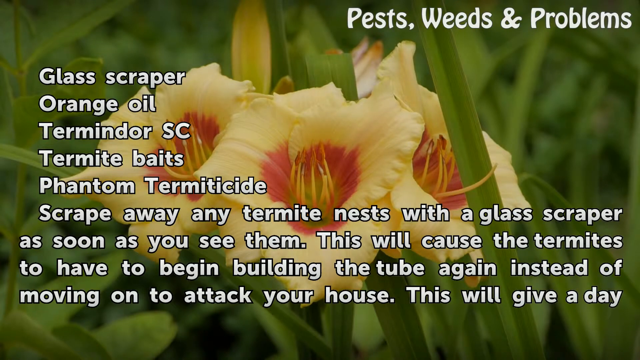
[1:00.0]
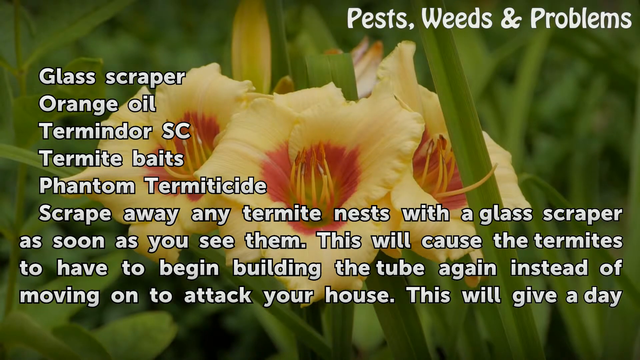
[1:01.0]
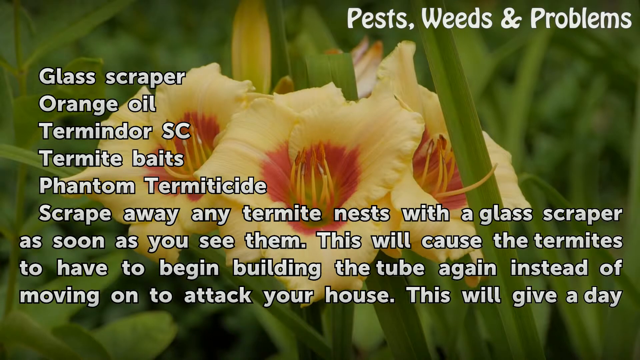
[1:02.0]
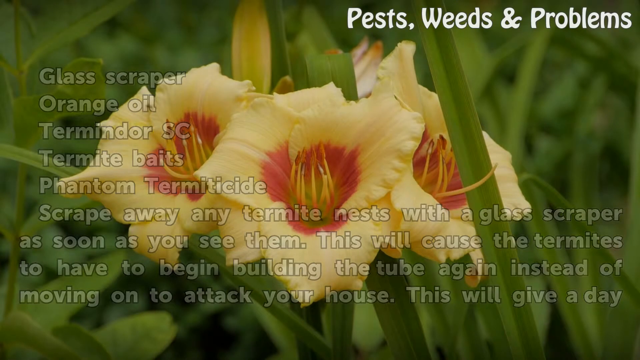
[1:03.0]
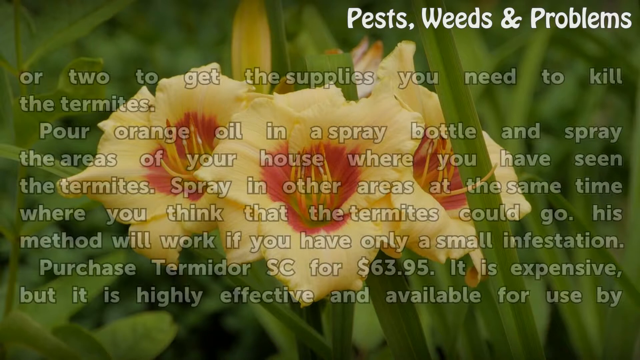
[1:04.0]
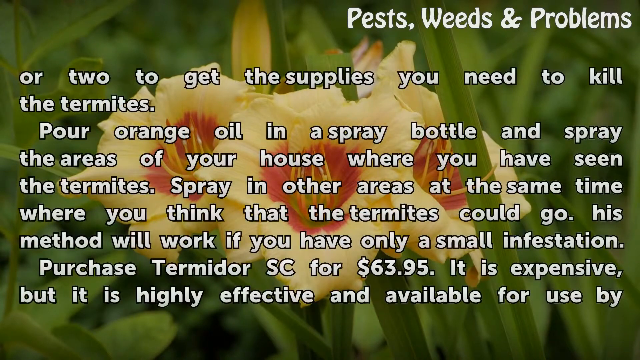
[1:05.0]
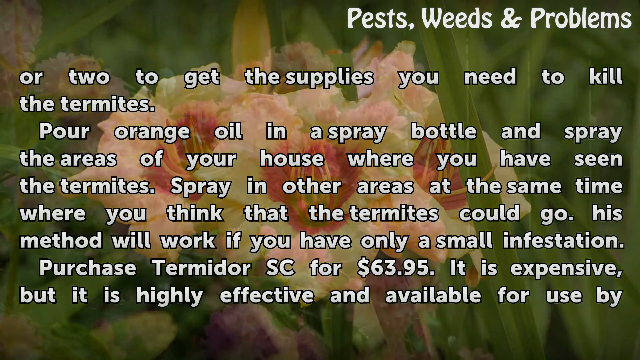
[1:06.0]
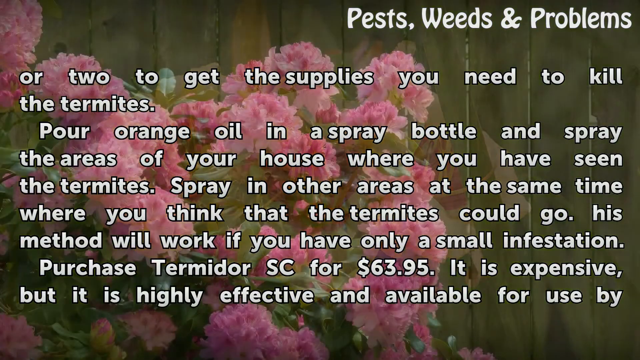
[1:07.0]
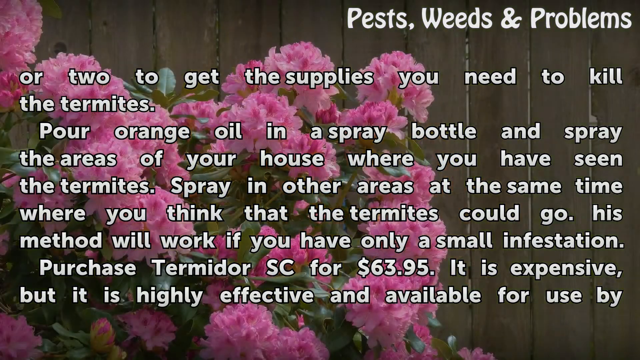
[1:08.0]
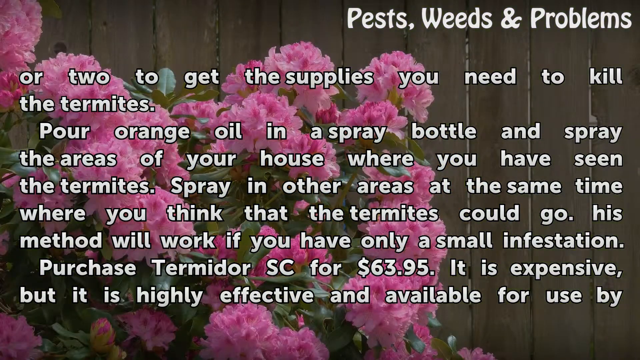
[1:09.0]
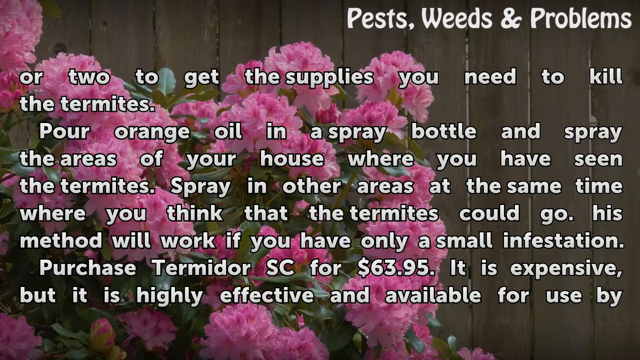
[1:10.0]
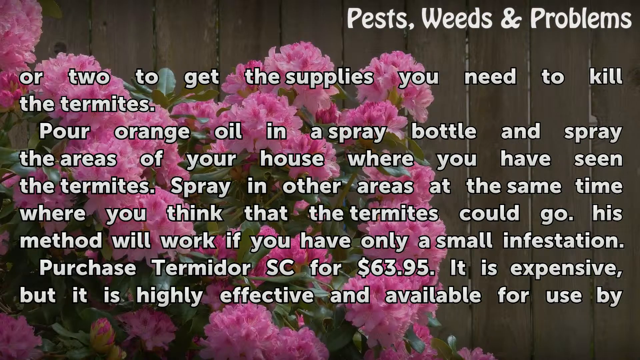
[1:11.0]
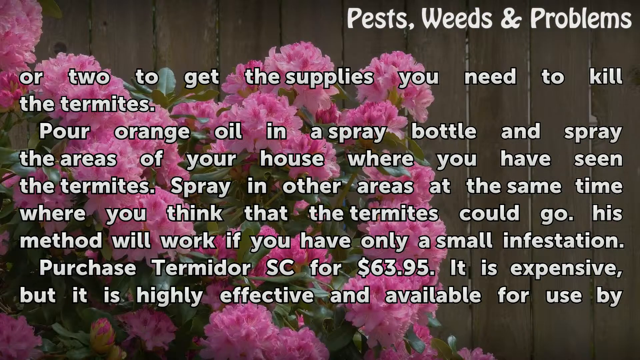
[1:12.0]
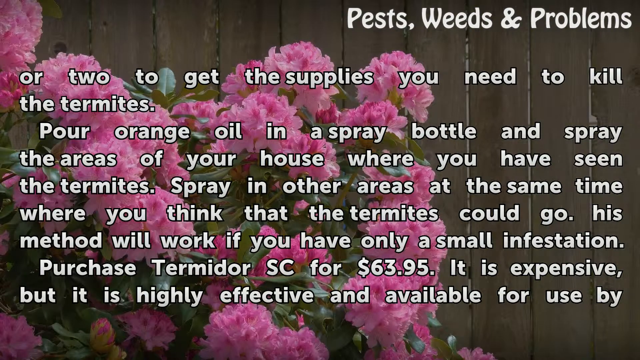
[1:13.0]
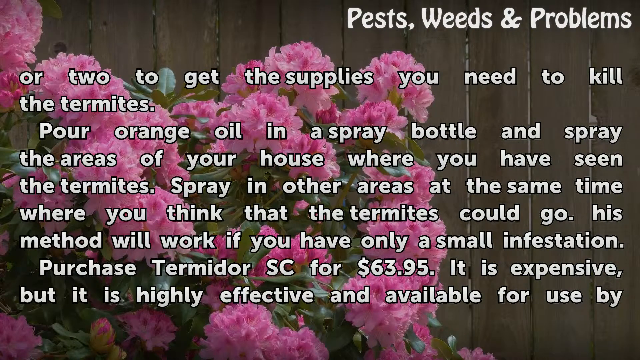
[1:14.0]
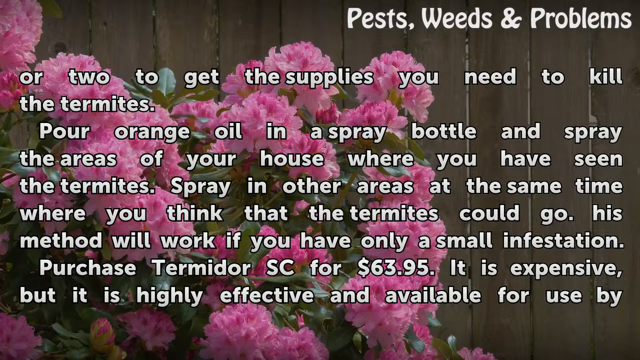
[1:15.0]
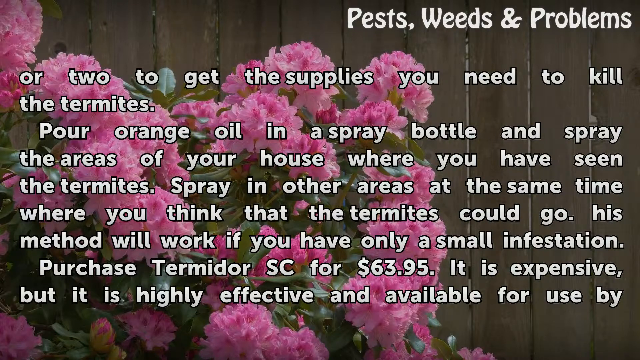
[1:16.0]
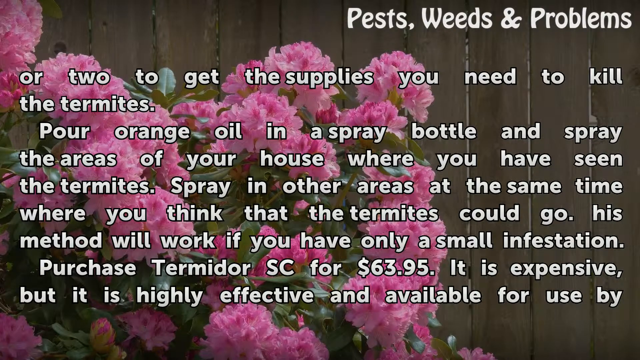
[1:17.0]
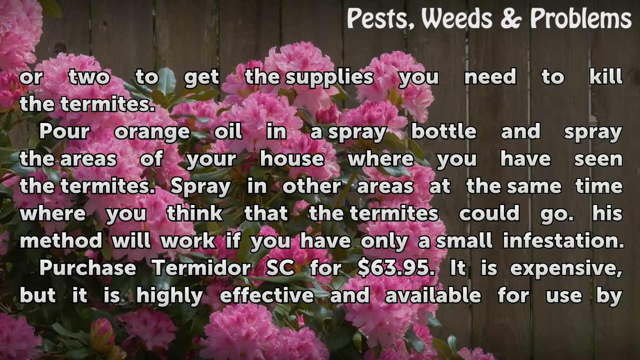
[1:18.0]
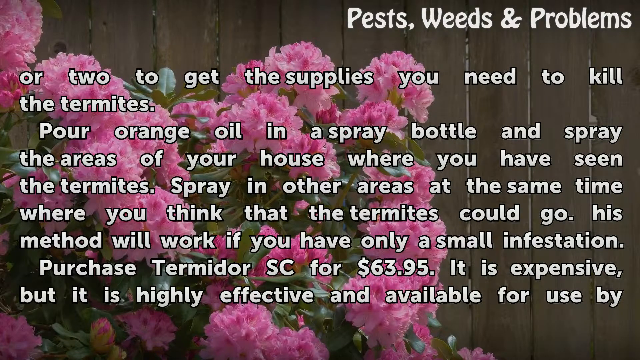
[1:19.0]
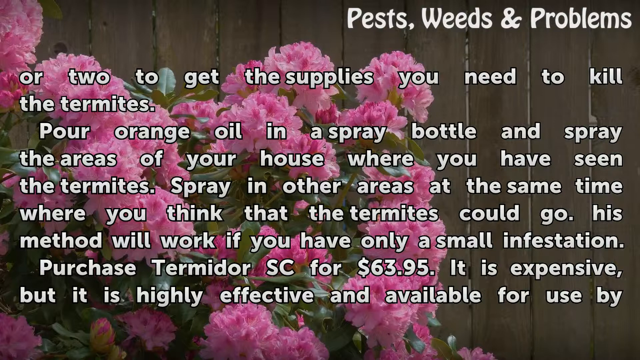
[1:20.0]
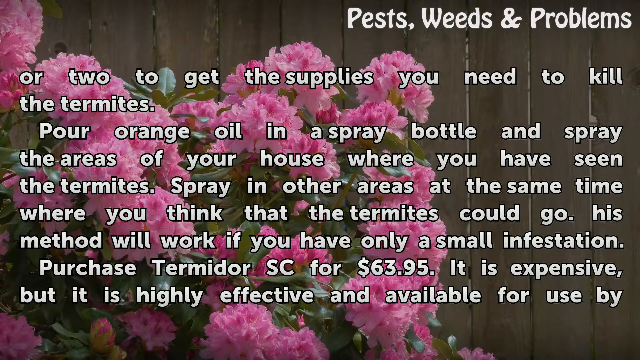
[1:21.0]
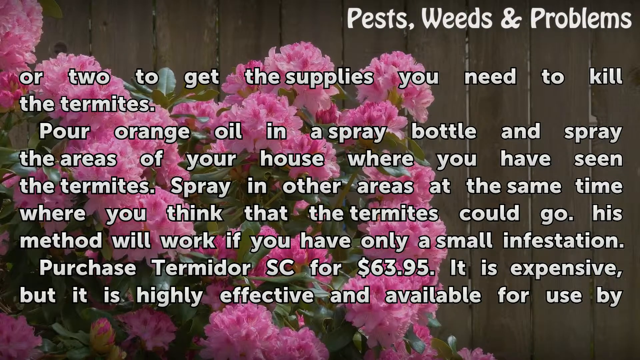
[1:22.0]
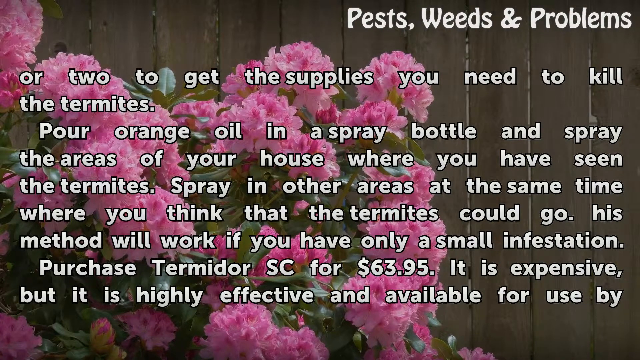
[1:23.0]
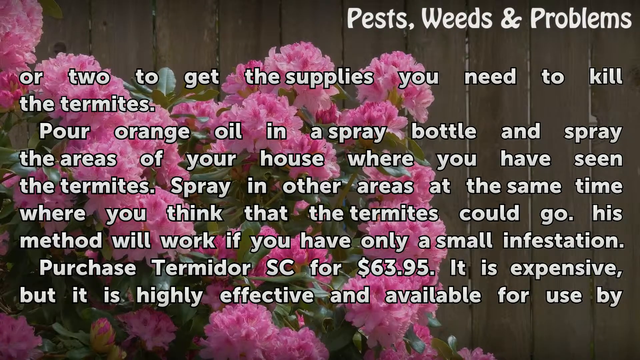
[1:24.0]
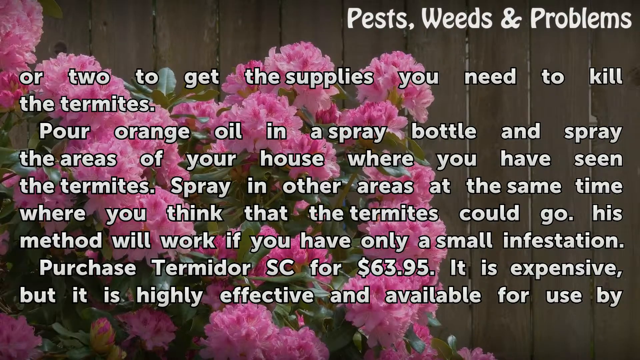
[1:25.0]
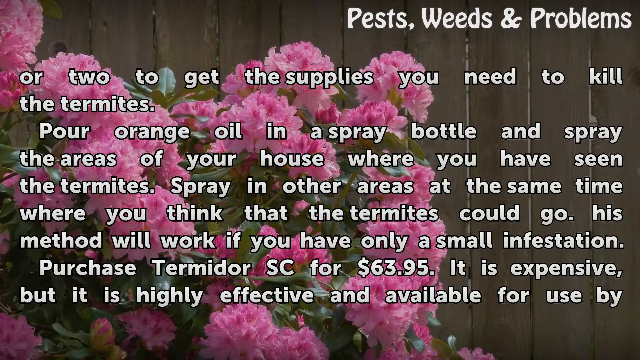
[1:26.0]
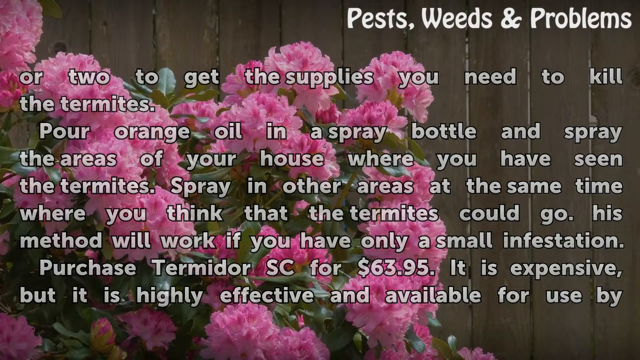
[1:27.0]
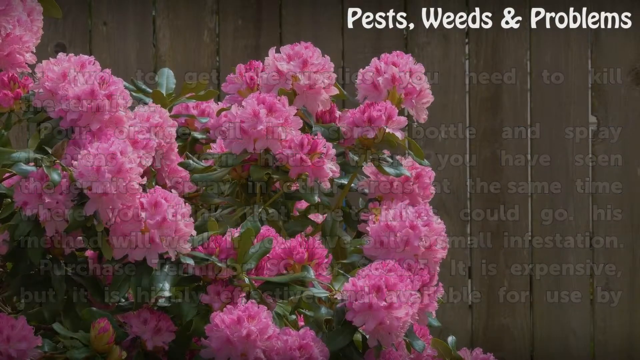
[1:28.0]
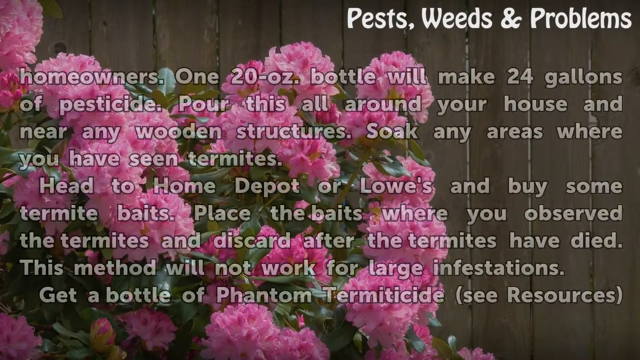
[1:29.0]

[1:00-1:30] The text fades away and is replaced by new information, which includes: "Pour orange oil in a spray bottle and spray the areas of your house where you have seen the termites. Spray in other areas at the same time where you think that the termites could go." The next line contains a typo, reading "his method will work if you have only a small infestation." The following sentence reads "Purchase Termidor SC for $63.95. It is expensive, but it is highly effective and available for use by." The background image mixes through to a different plant: a pink azalea bush that fills most of the frame, with a brown wooden fence visible behind it. The text stays on screen for an extremely long time before mixing through to another page of text.